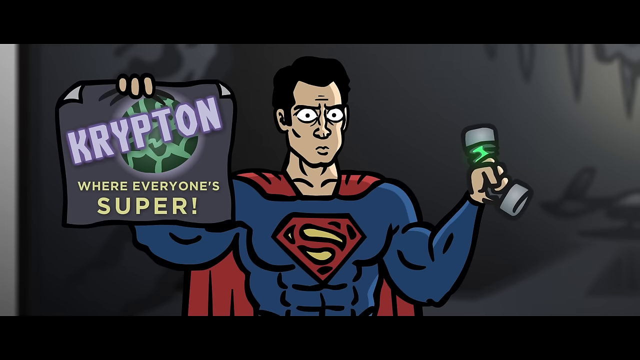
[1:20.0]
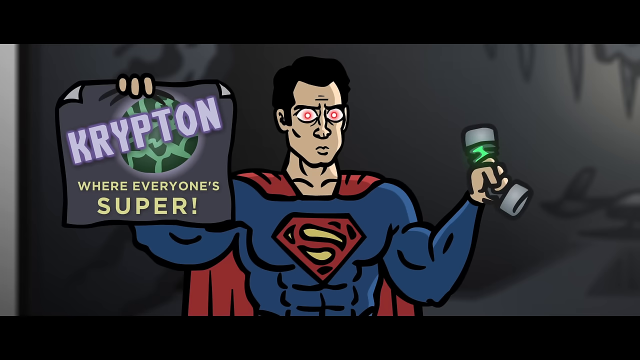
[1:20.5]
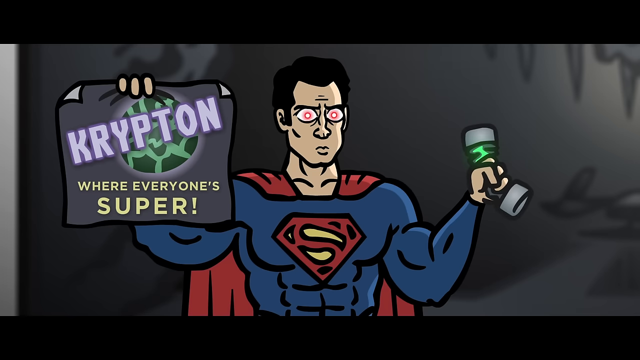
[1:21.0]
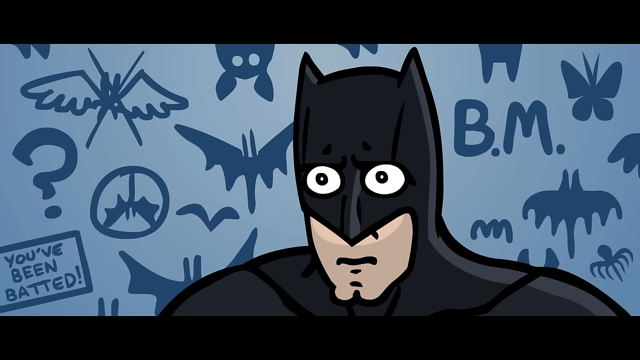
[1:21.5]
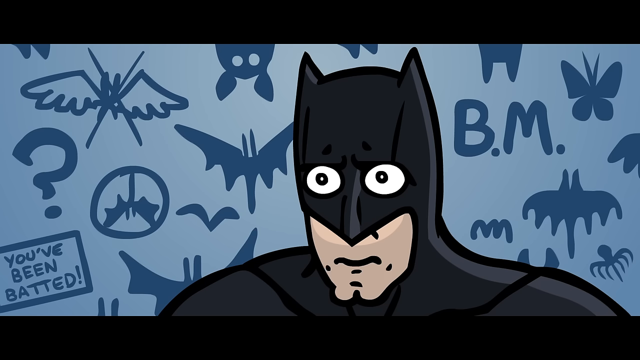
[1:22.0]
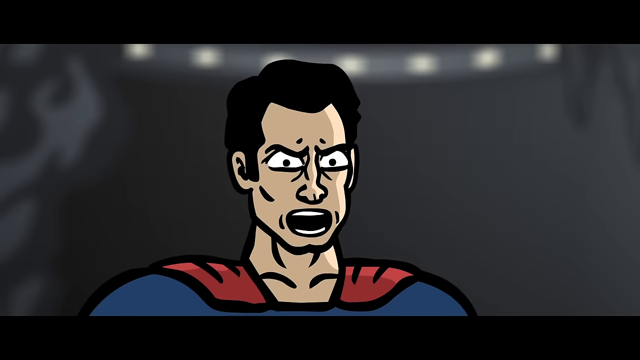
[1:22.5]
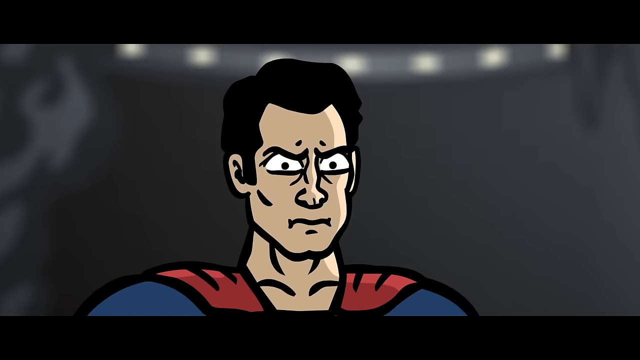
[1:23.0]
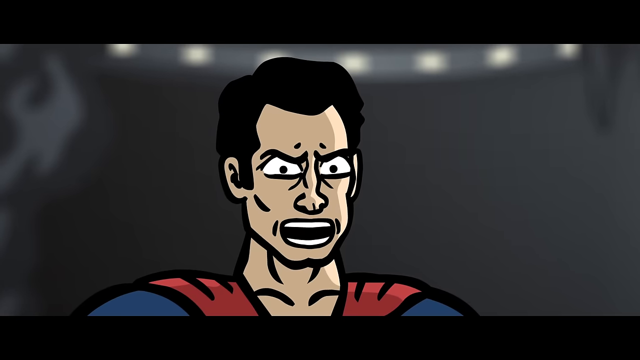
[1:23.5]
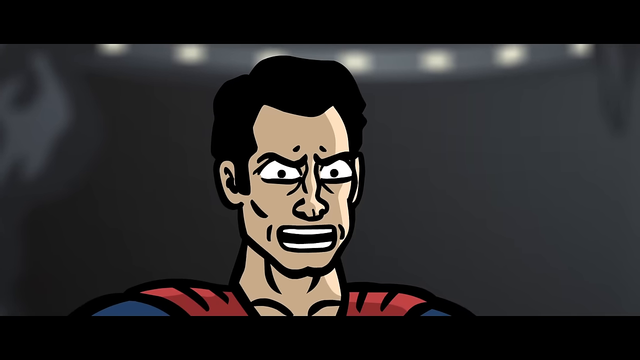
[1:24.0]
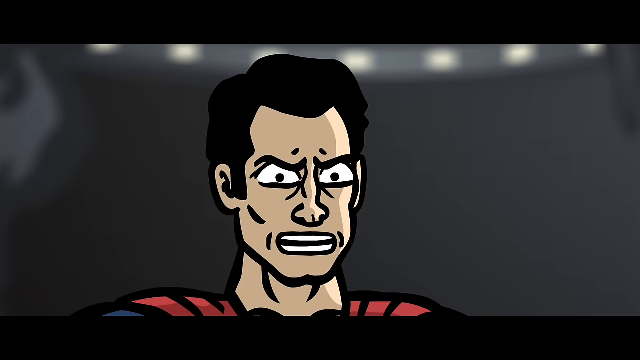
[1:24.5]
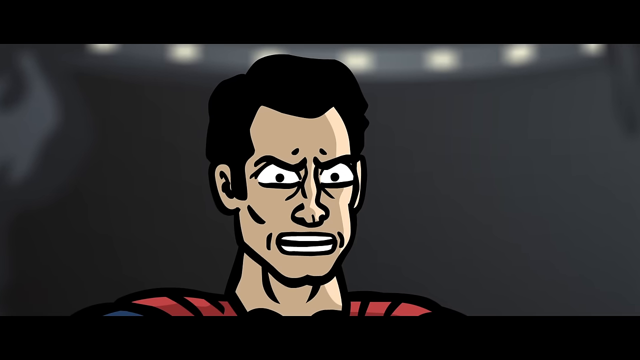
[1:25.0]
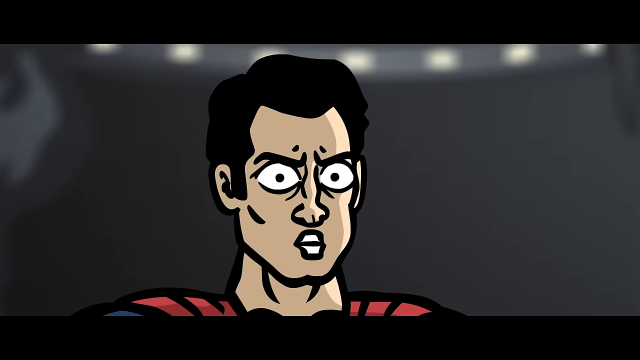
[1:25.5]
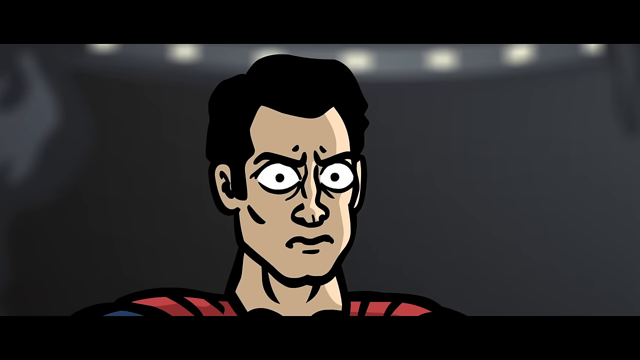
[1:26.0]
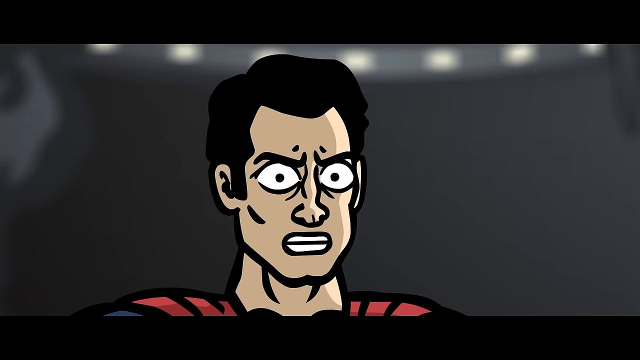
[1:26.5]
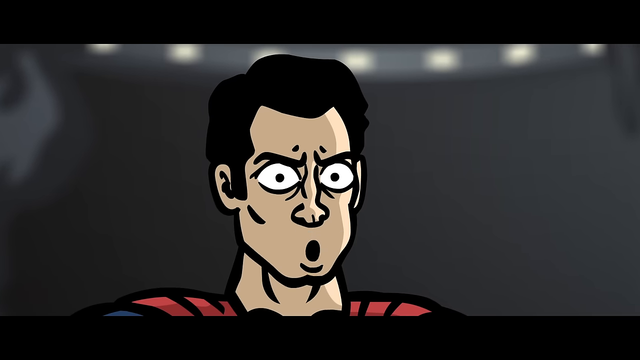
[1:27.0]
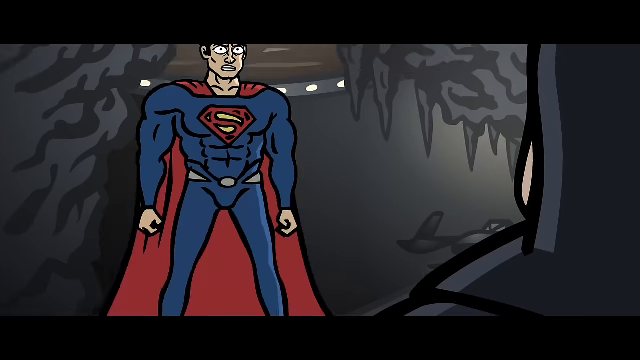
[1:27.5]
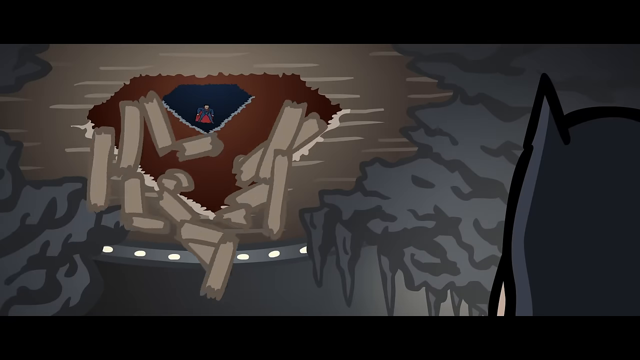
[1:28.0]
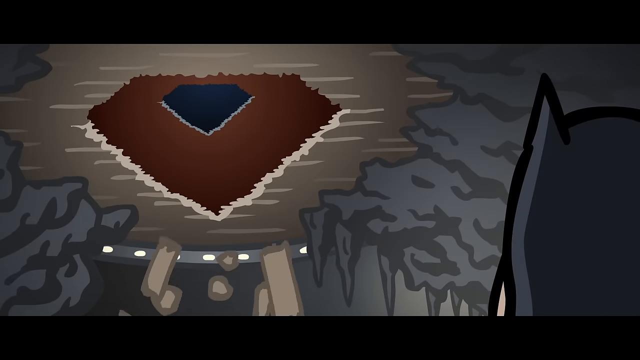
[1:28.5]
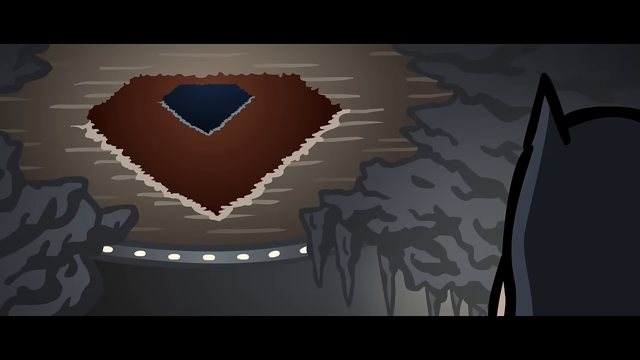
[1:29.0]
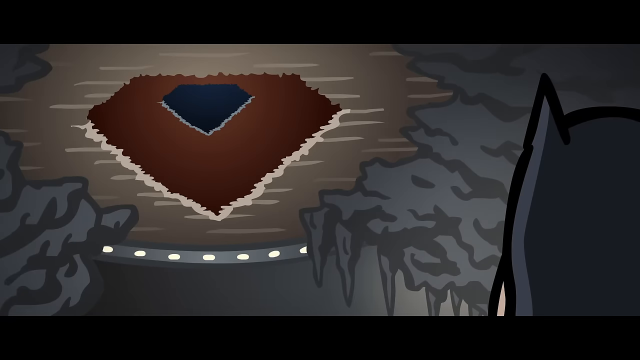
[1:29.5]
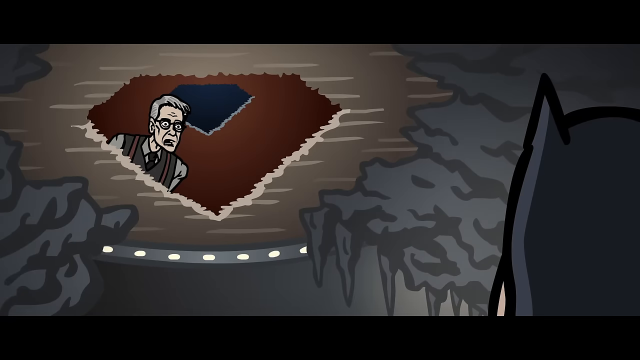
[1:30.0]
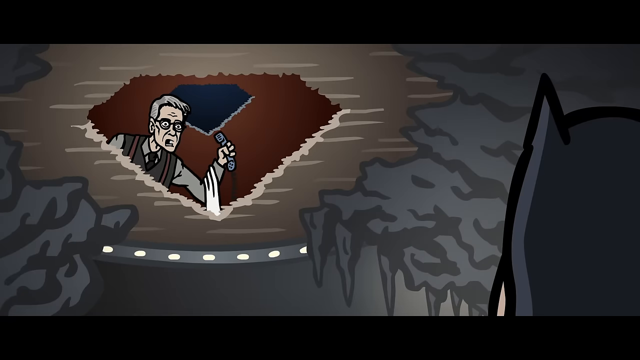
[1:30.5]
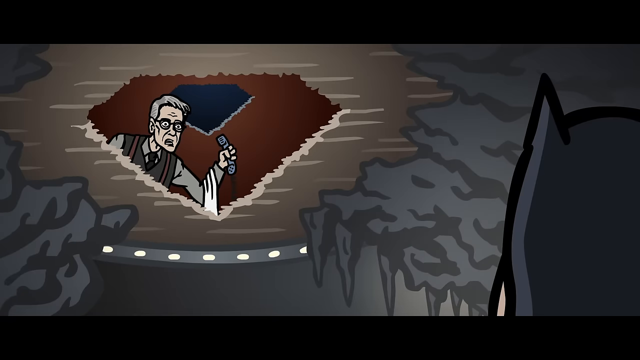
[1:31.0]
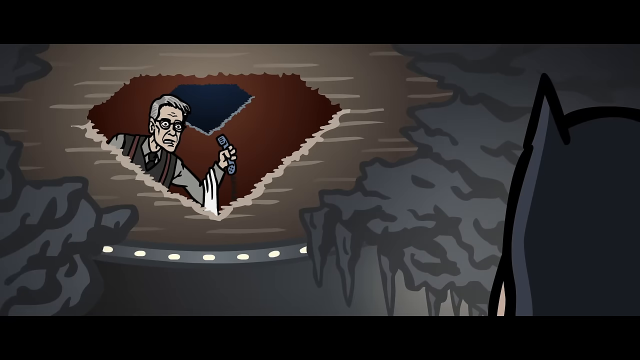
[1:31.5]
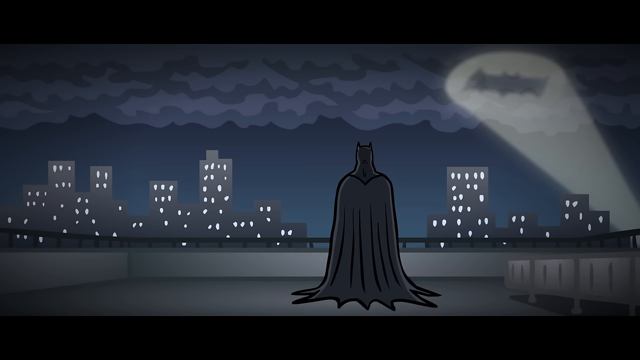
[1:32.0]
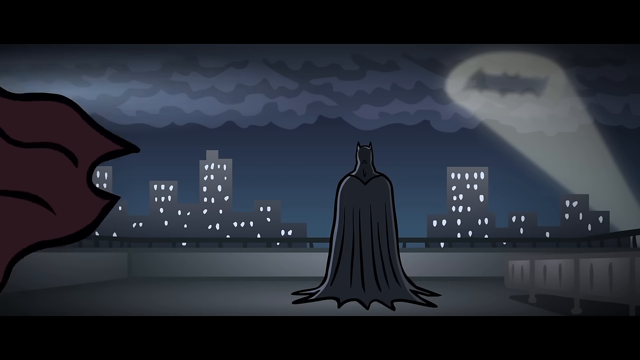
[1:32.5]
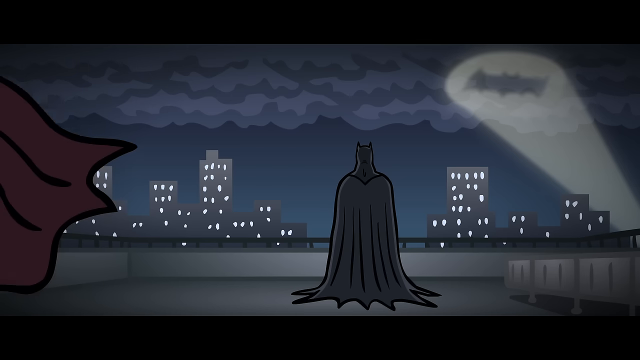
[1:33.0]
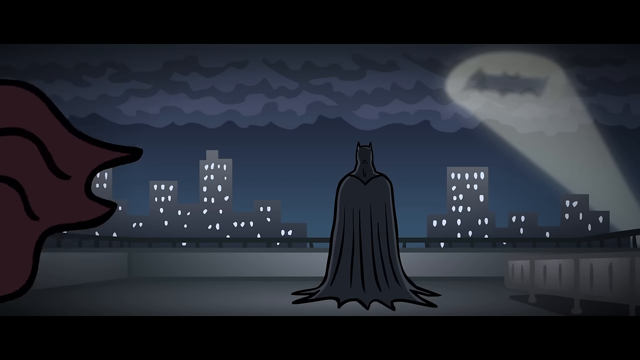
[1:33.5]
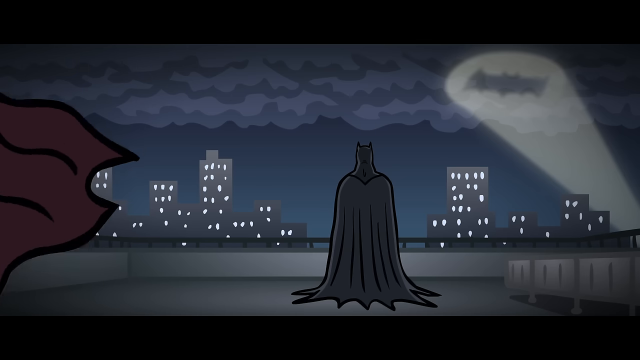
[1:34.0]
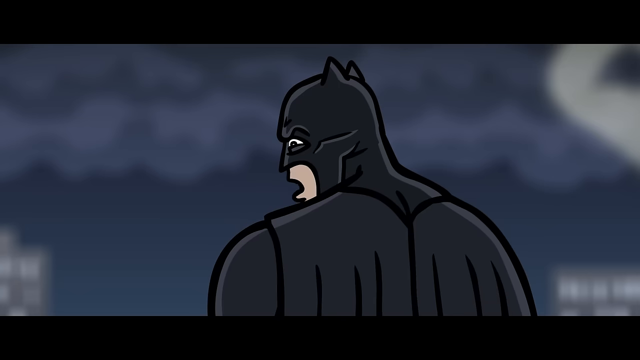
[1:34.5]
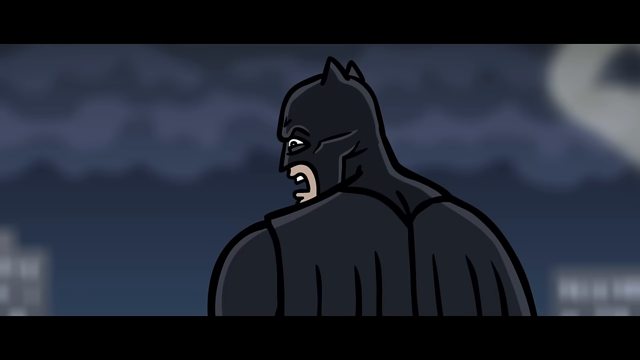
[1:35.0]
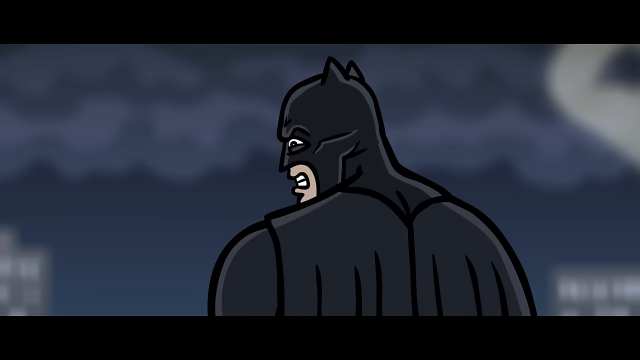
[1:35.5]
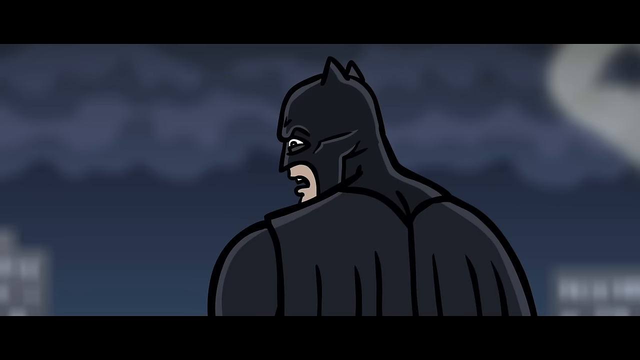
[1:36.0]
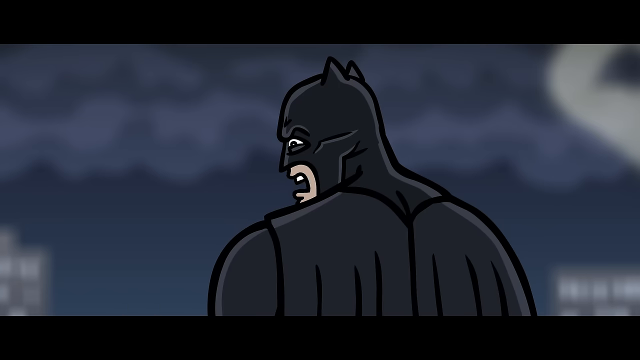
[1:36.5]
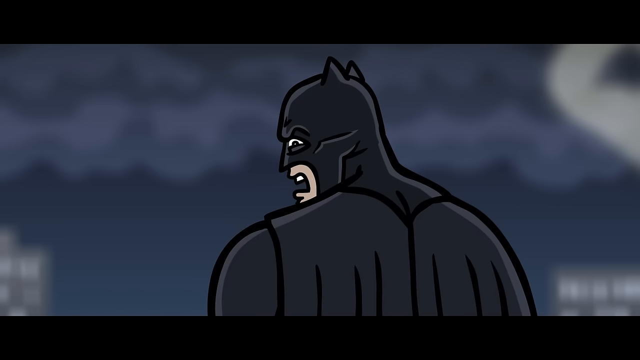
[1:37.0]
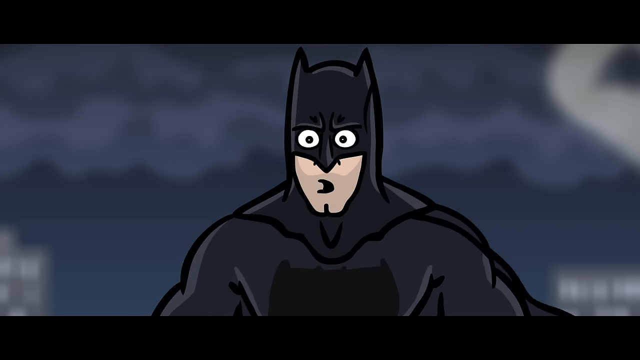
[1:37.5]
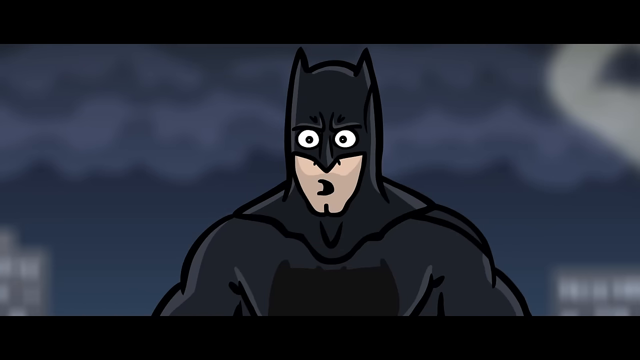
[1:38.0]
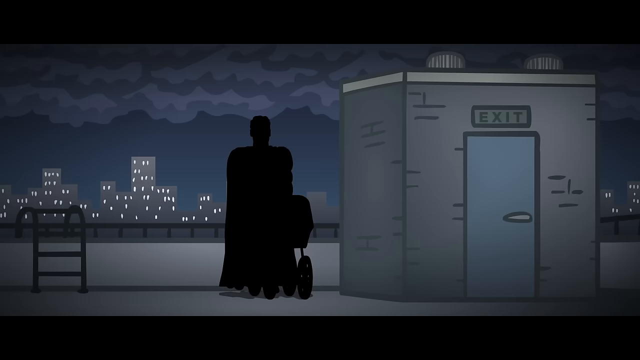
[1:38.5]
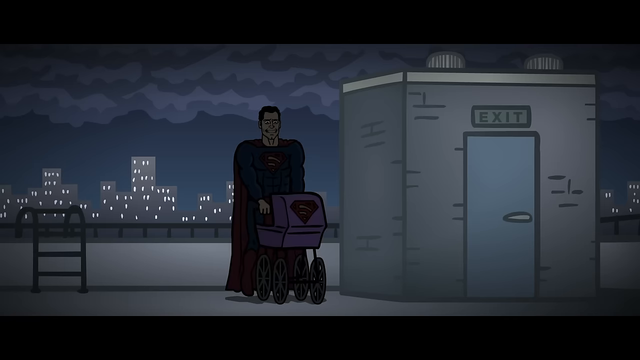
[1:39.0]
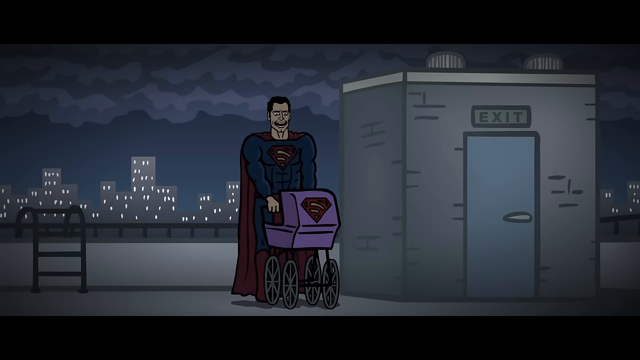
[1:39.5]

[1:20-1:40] In a close-up, Superman looks angry. The two appear to be inside the Batcave talking. Superman then flies away through the ceiling of the cave, punching a hole as he goes, and the hole he leaves is shaped just like the outline of the S symbol on his chest. Alfred peeks in from the floor above, looking down through one of the holes Superman left. He holds a phone in his left hand and has a white towel draped over his left arm. Batman then stands on a roof at night with a skyline out in front of him, lights on in the skyscrapers and clouds above, where the Batman symbol is illuminated by a spotlight. Superman's cape blows in the breeze behind him on the left side of the frame. Batman turns to his left and looks over his left shoulder as he speaks to Superman.